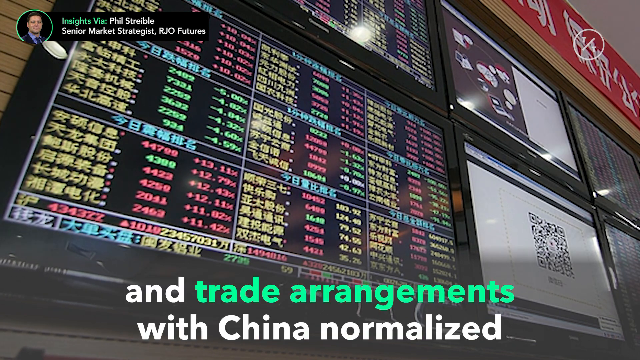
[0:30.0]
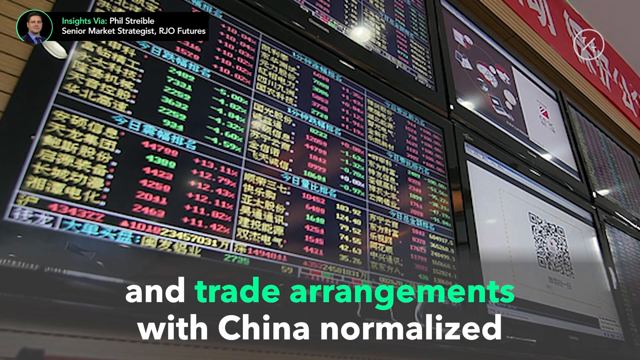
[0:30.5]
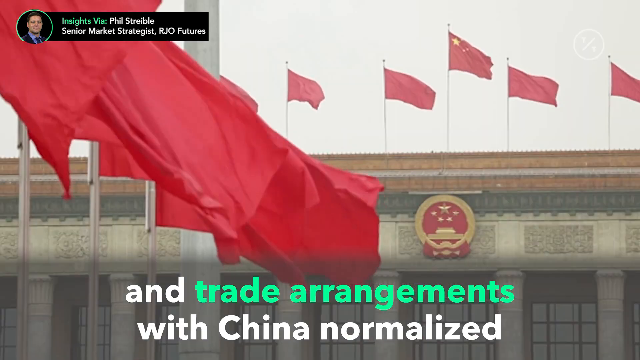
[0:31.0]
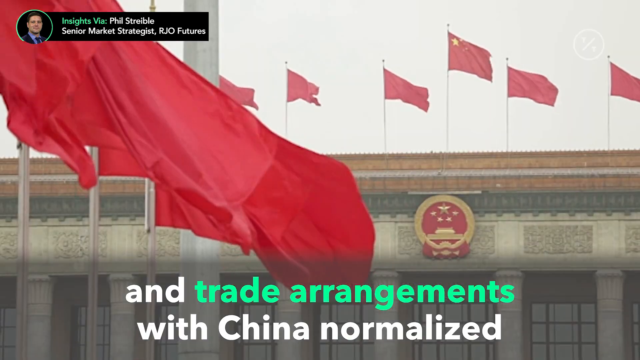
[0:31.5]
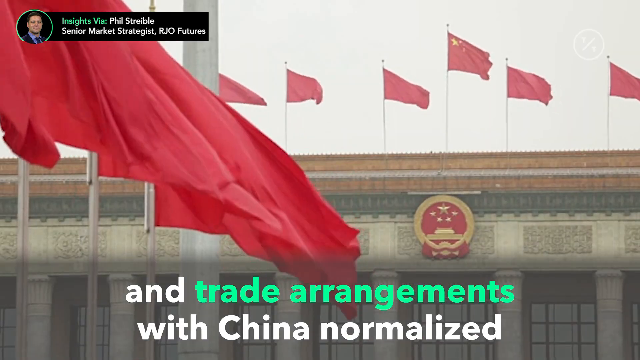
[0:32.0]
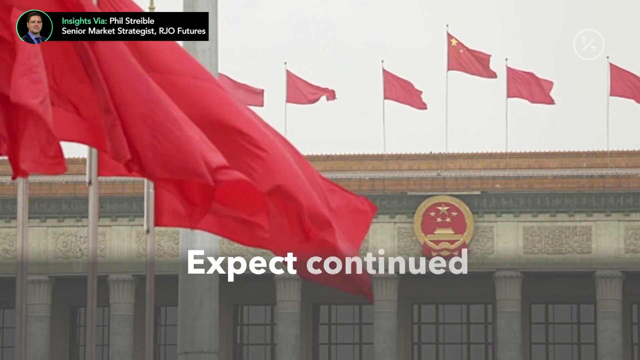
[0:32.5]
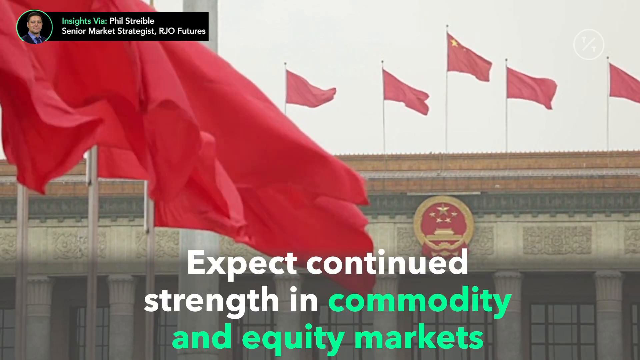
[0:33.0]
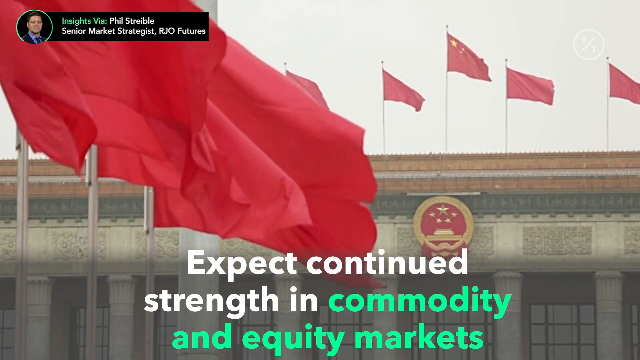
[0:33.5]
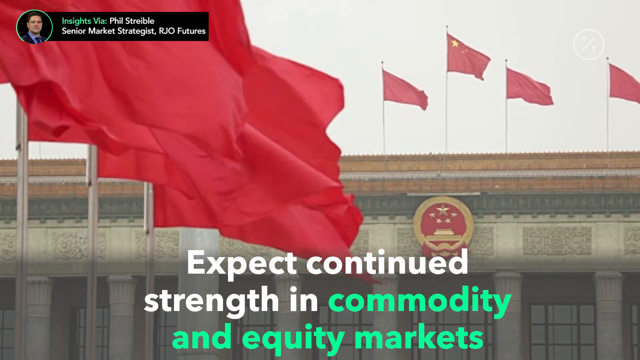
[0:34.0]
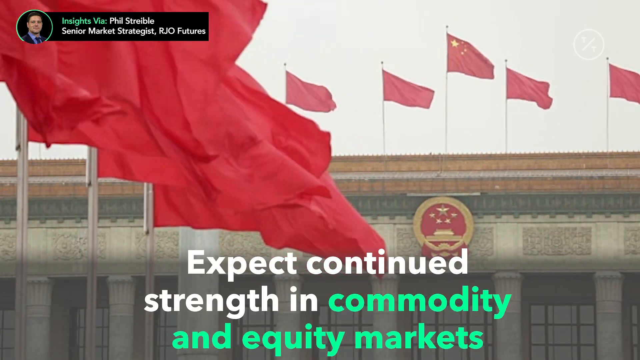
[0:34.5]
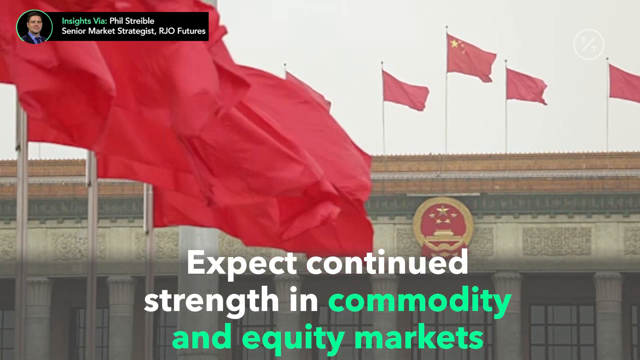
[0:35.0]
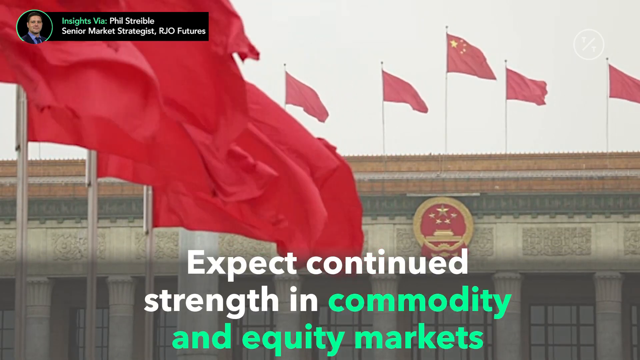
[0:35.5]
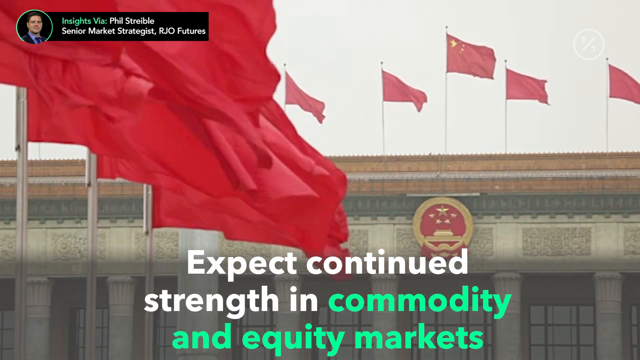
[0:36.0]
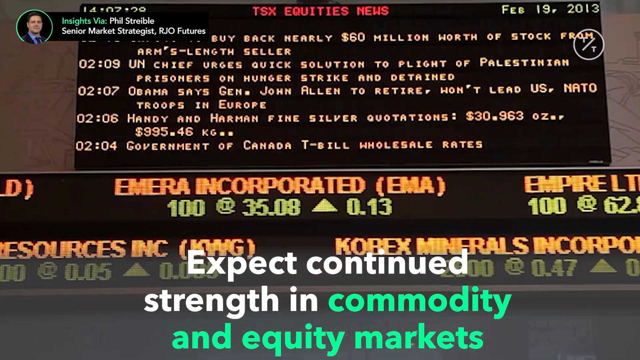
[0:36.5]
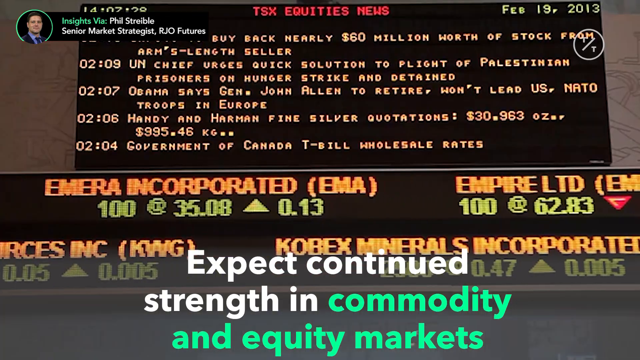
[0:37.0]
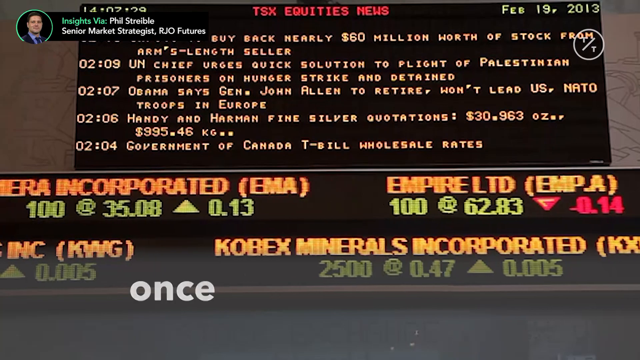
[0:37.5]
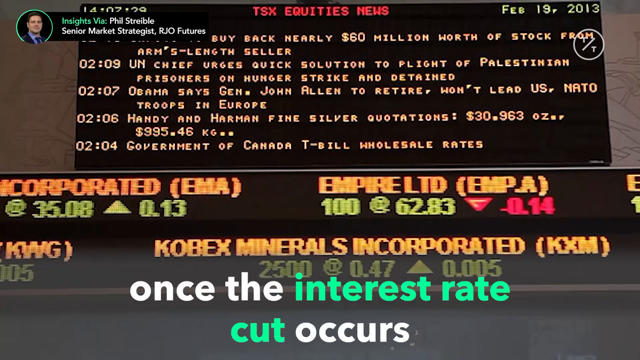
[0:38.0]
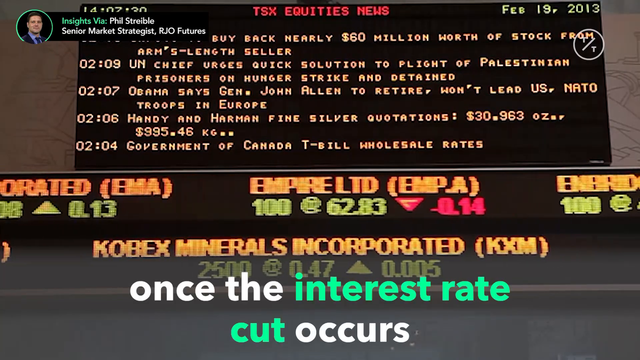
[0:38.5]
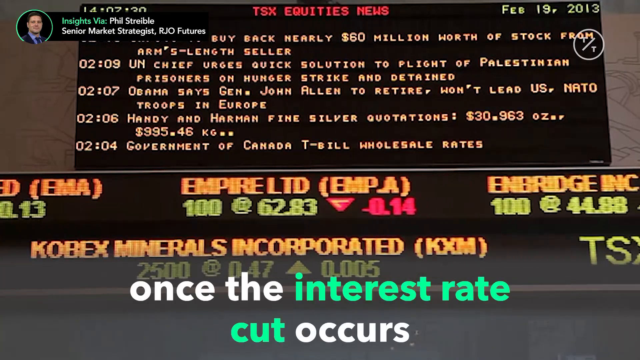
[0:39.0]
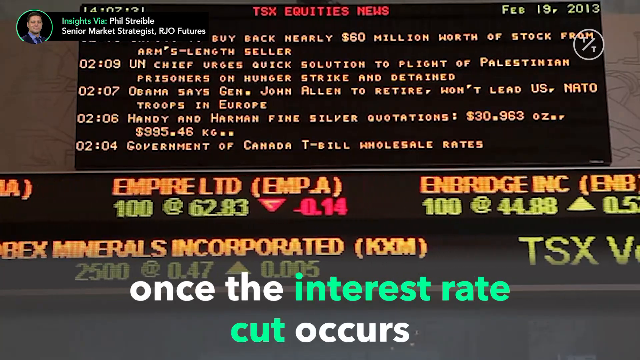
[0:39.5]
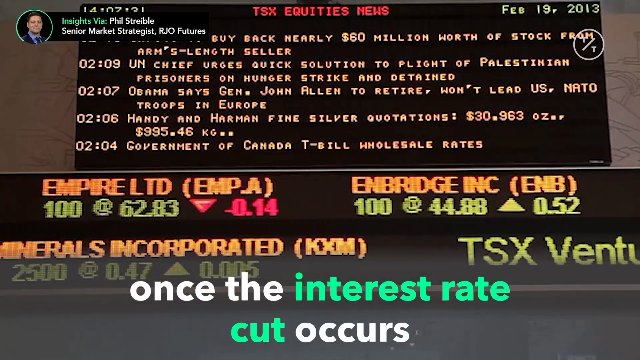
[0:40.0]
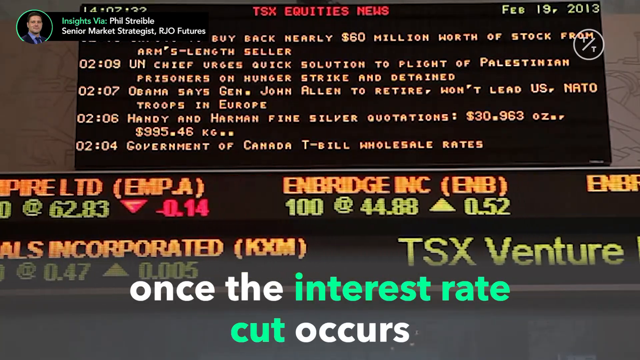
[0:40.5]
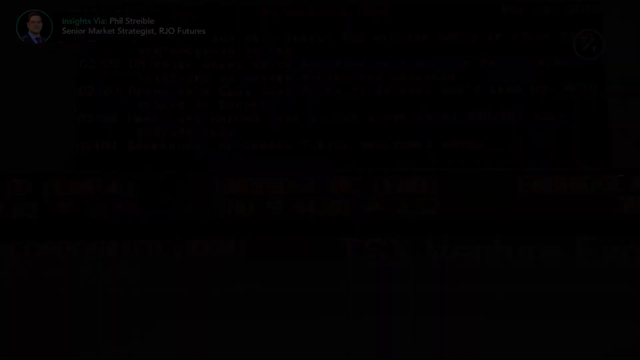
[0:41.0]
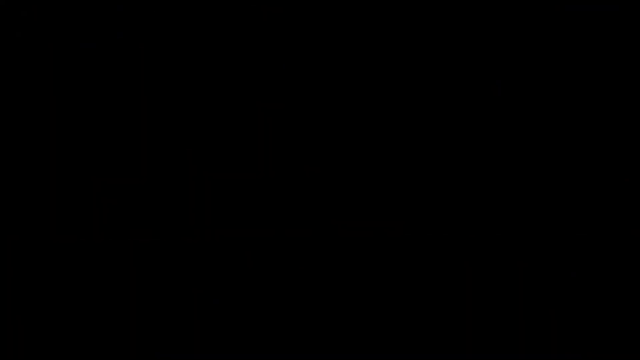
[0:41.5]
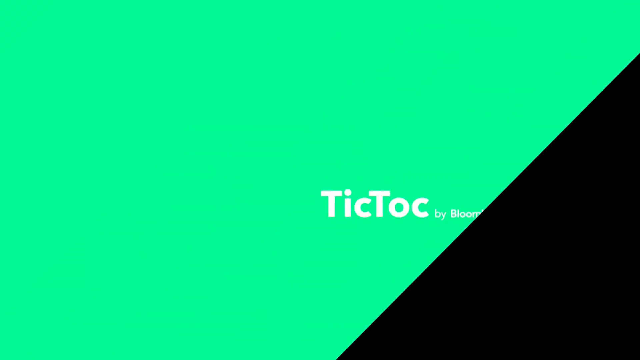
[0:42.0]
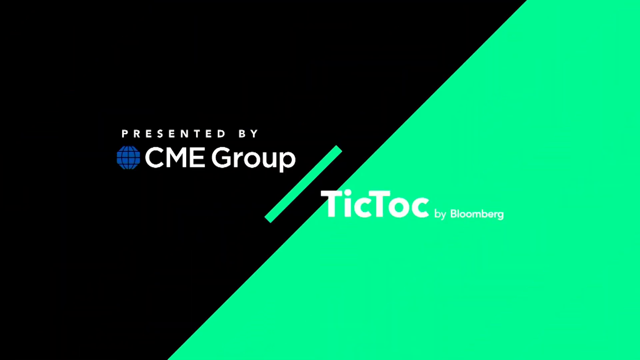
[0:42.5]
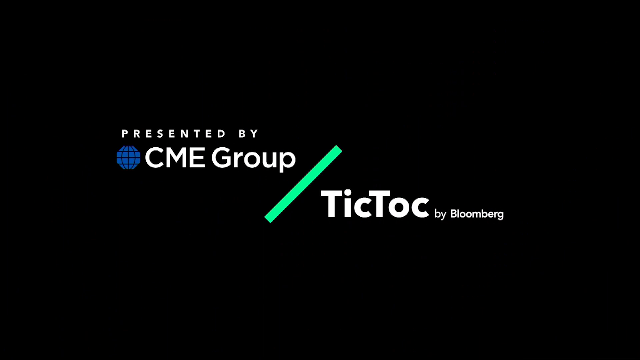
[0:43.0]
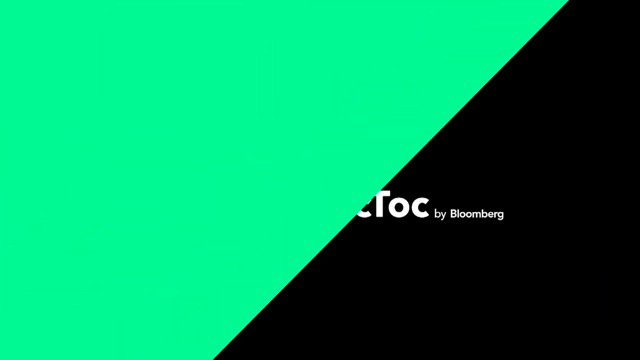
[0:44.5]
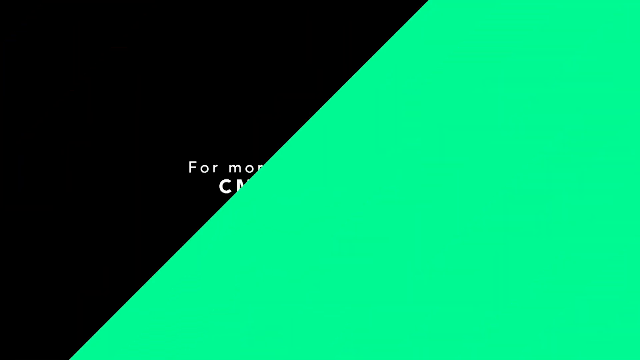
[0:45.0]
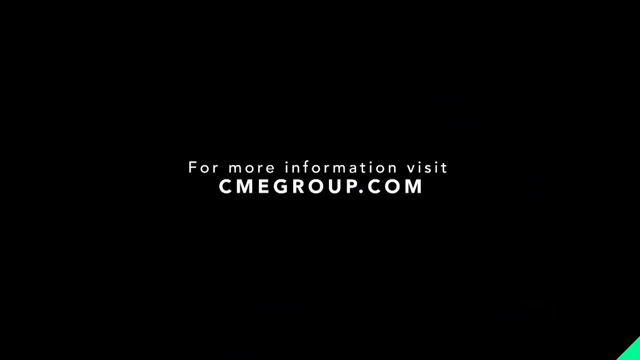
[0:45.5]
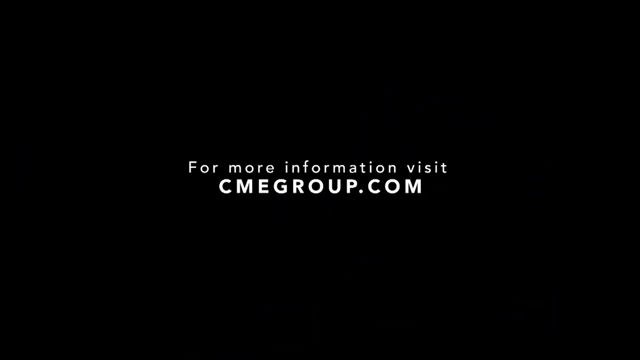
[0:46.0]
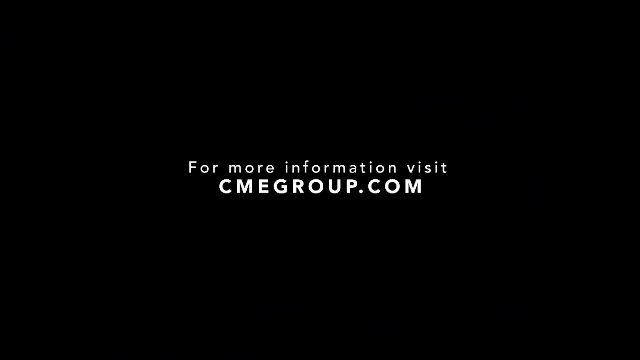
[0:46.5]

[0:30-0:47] Various flags, all red with a gold star, appear, with a building in the background. The flags on the left side of the screen are much closer than those on the right, which stand upright and far away. Text below reads "and trade arrangements with China normalized, expect continued strength in commodity," with all the words in white except "commodity," which is green. The screen changes to a black screen reading "TSX equities news" in red and "February 19, 2013," with related information below. What looks like four companies appear in orange, with stock data below the company names; the display moves to the left as new information about the companies keeps appearing. Text at the bottom then says "once the interest rate cut occurs." A black closing screen follows, reading "presented by CME Group," with "TikTok by Bloomberg" in the bottom right and "For more information visit cmegroup.com."